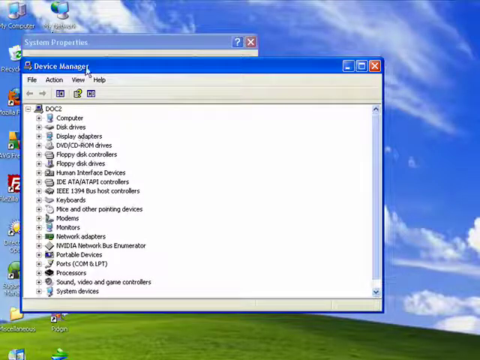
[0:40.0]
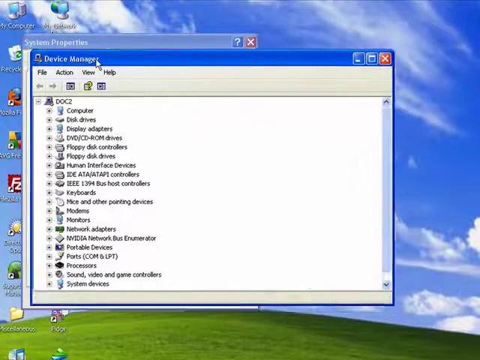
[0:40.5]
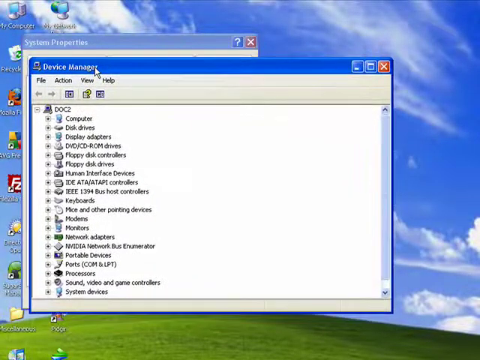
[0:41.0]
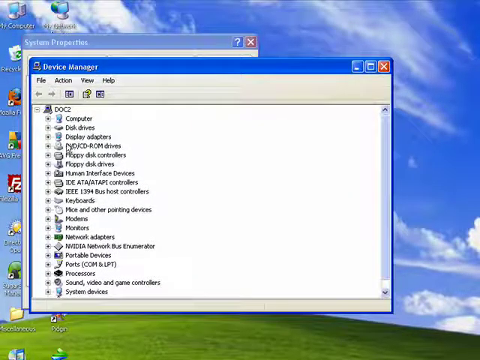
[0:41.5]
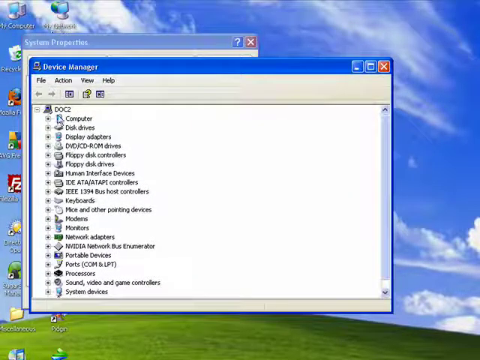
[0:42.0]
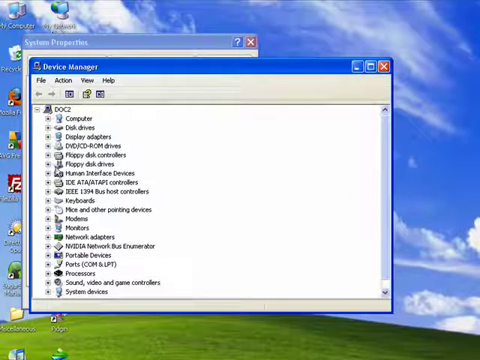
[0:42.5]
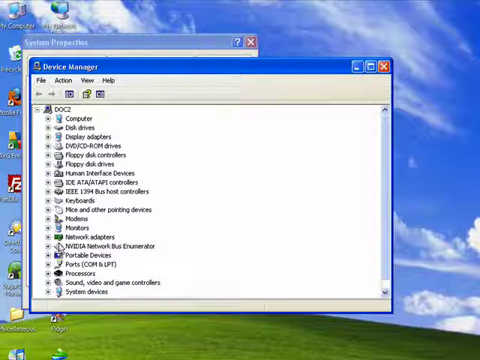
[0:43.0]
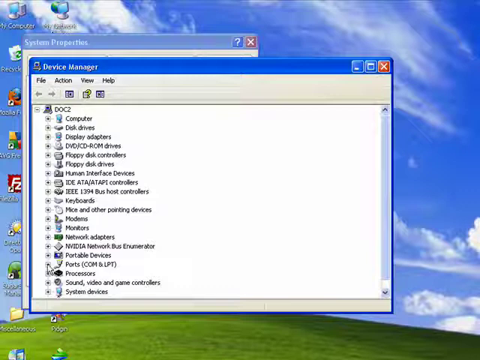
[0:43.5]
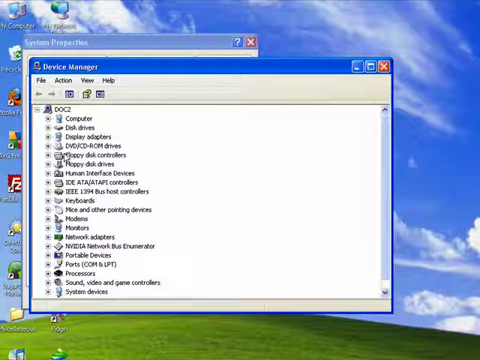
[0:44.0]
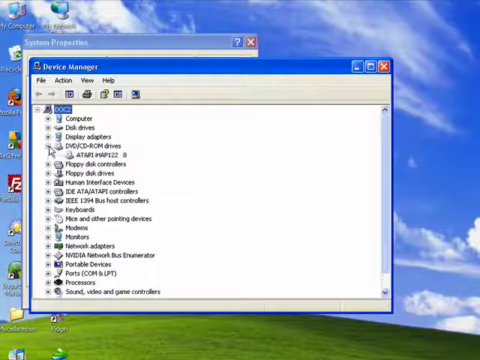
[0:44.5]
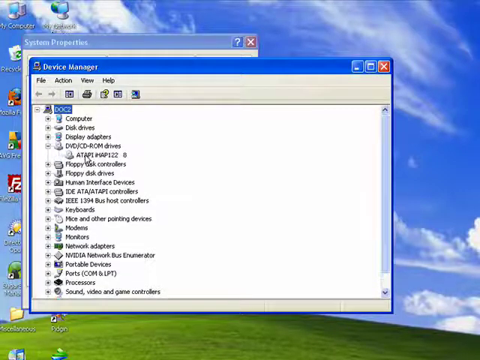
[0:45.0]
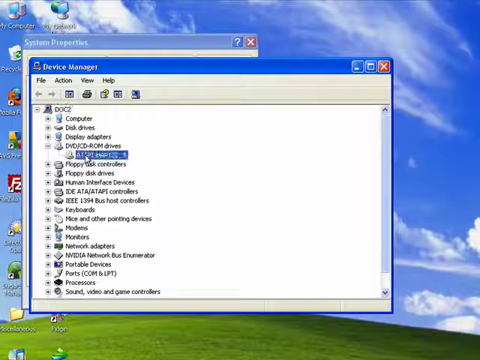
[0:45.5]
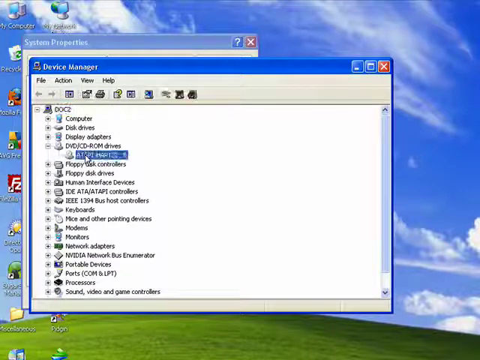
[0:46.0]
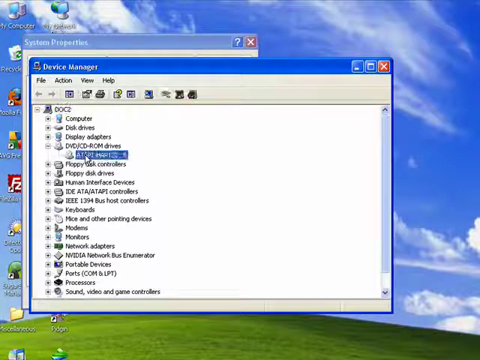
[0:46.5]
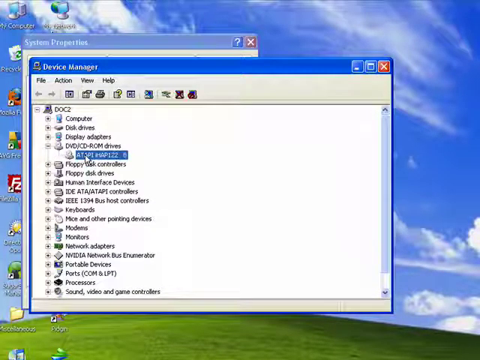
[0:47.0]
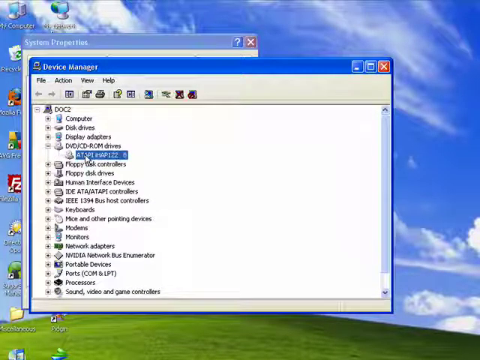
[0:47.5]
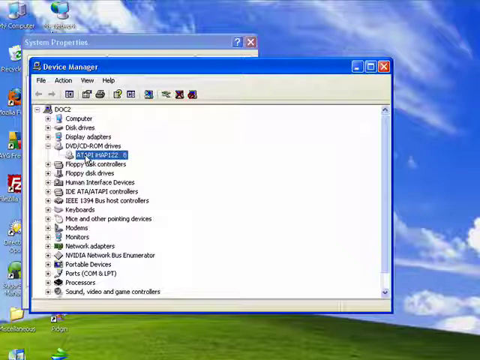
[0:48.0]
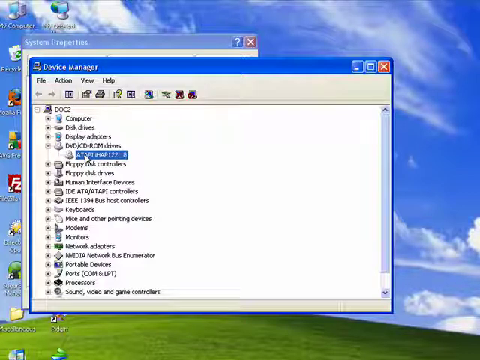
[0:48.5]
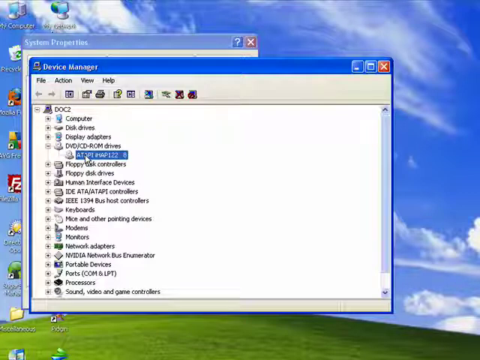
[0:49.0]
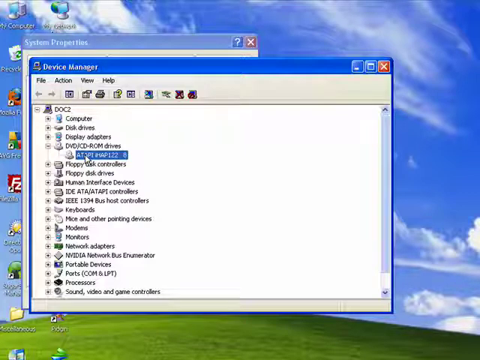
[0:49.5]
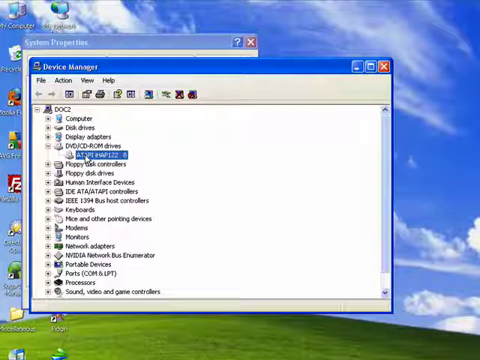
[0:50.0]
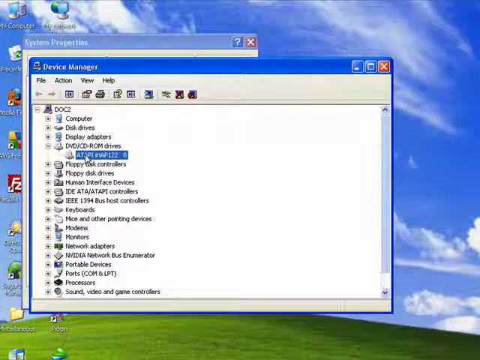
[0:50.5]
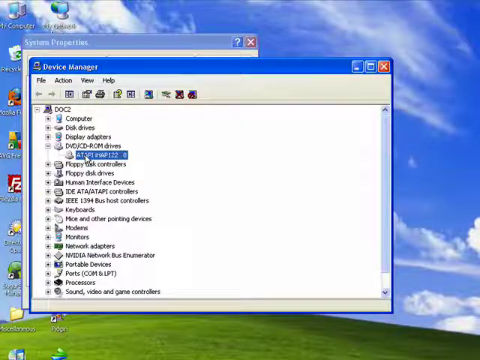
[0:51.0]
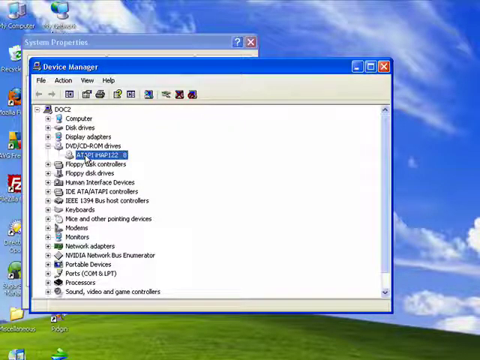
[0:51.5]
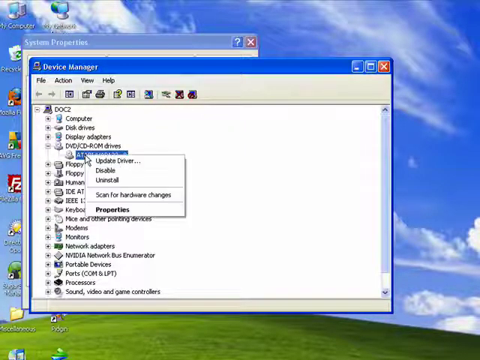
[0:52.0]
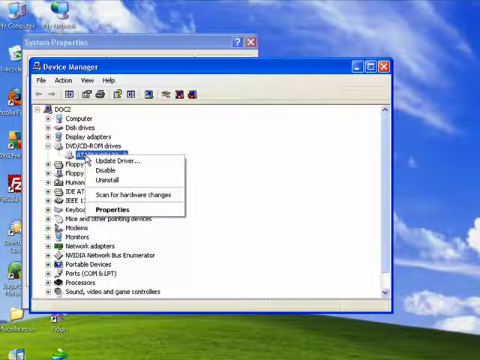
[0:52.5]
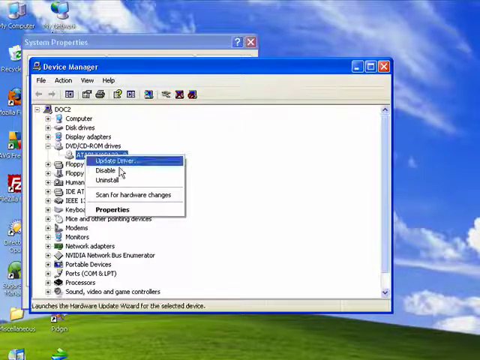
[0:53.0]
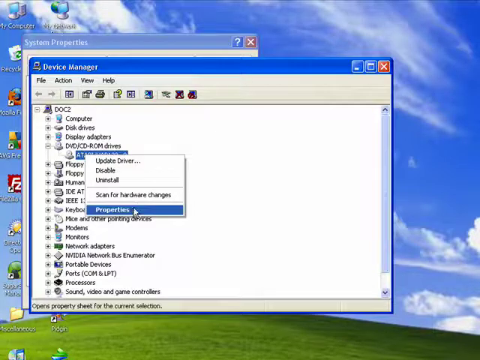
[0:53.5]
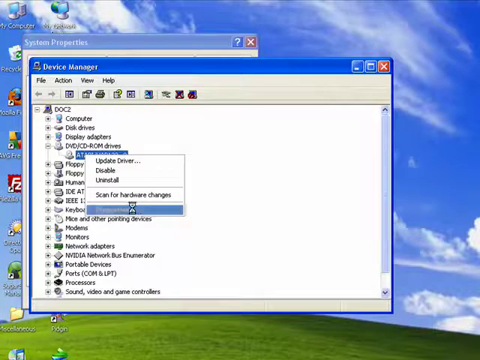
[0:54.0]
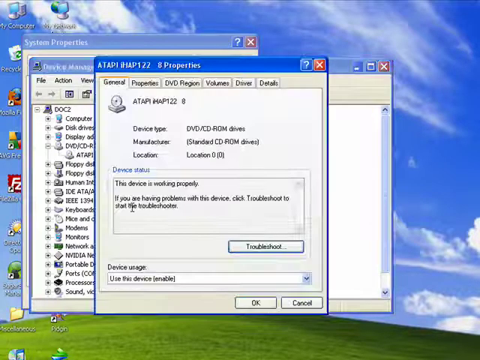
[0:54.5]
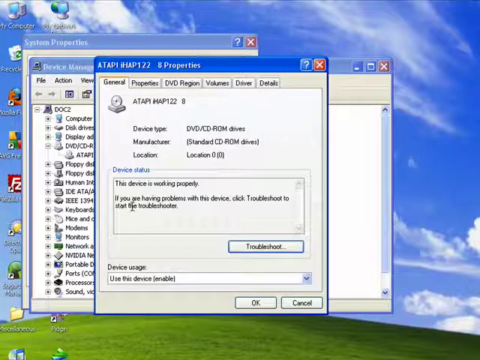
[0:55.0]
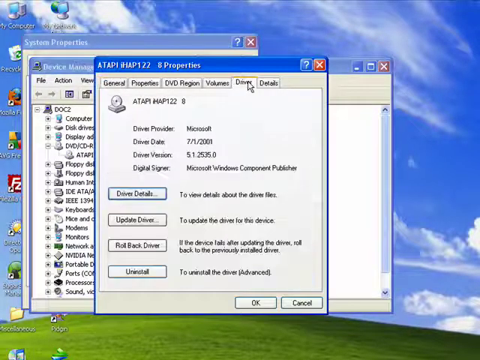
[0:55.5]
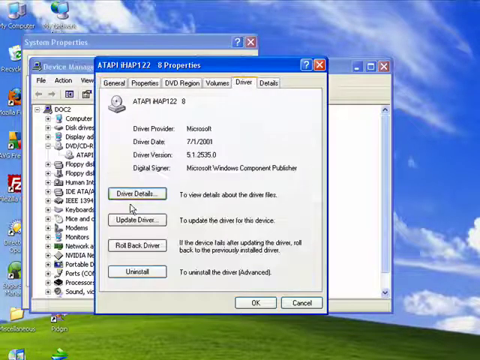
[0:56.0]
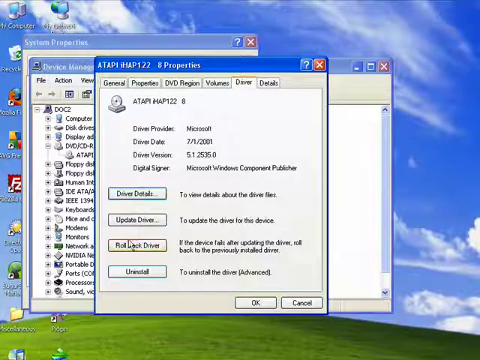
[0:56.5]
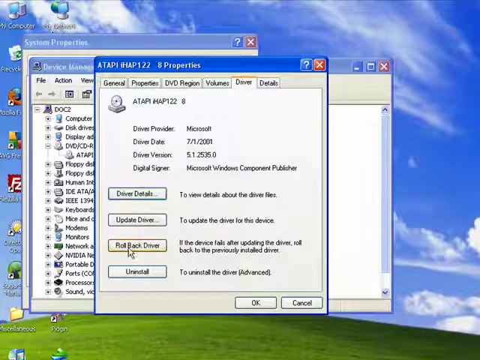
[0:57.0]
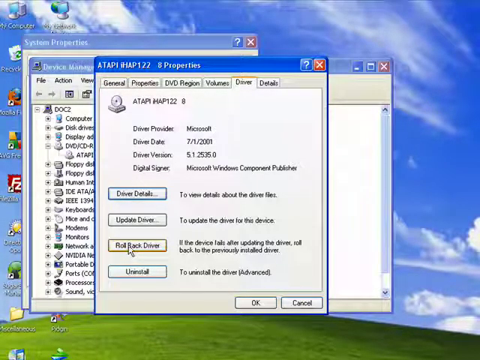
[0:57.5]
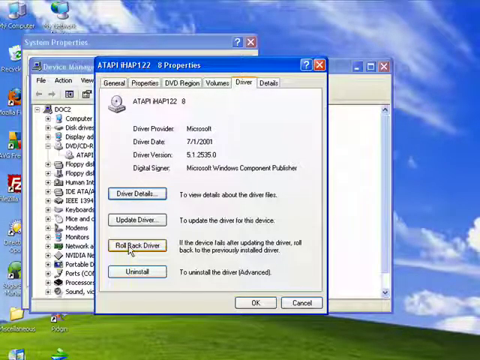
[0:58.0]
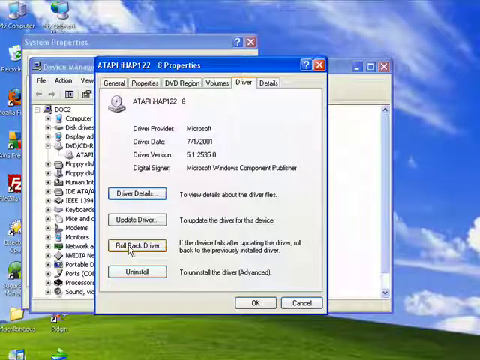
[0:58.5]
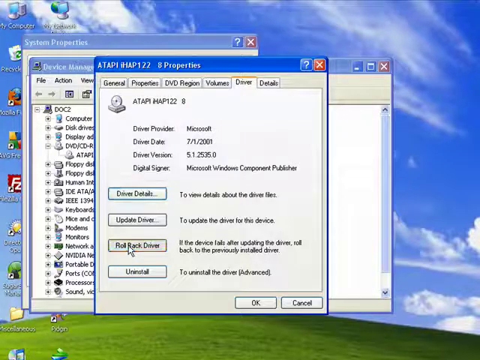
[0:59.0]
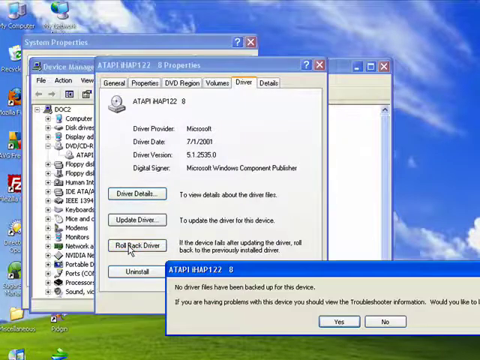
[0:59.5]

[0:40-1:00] The Windows home screen shows the standard icons over the traditional Microsoft background of clouds, blue sky and a hill with green grass. The My Computer icon is right-clicked and System Properties is opened, and inside it Device Manager is selected. The Device Manager window is moved a little to the right; its list starts with the computer, the disk drive and the display adapters, followed by DVD/CD-ROM drives. That entry is clicked, and the Atapi driver that runs the CD-ROM is highlighted in blue with the cursor. The driver is right-clicked and its properties are opened, bringing up another screen with four buttons on the left side: Driver Details, Update Driver, Roll Back Driver and Uninstall. The Roll Back Driver button is selected, and another screen appears asking whether to roll the driver back, with yes and no buttons.